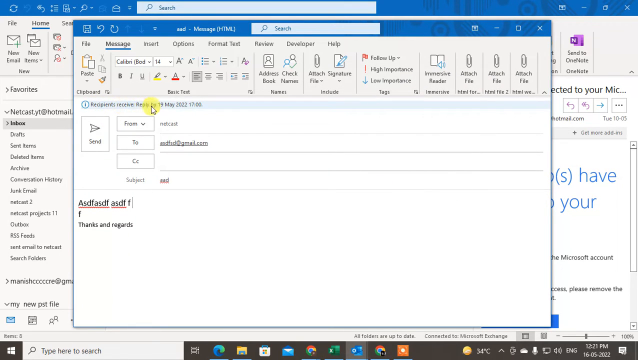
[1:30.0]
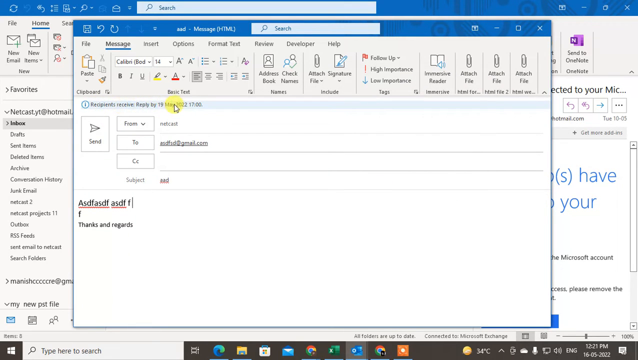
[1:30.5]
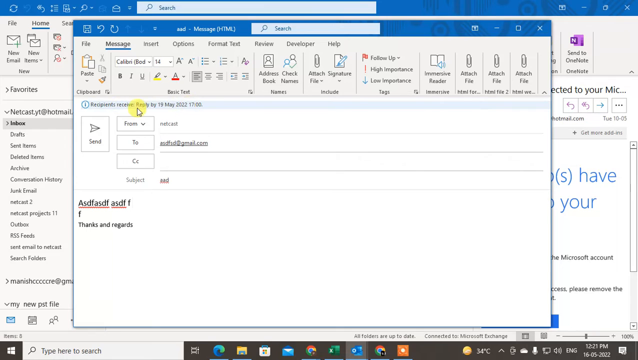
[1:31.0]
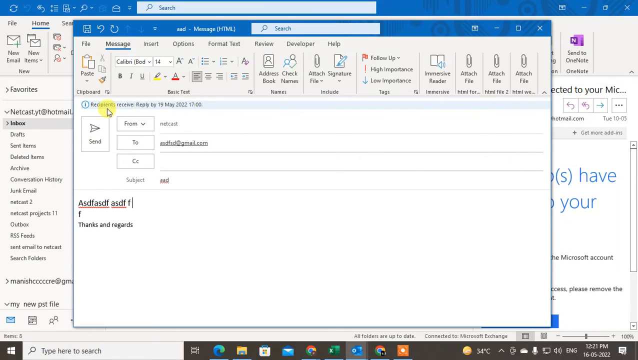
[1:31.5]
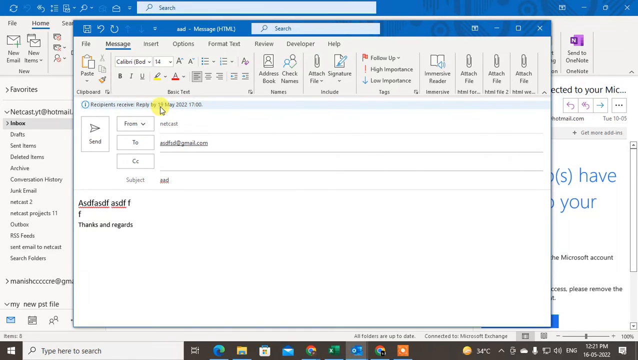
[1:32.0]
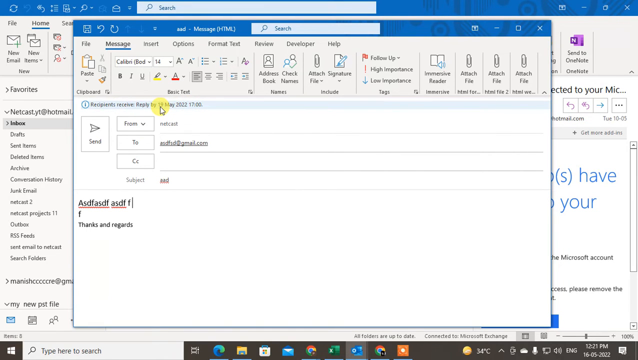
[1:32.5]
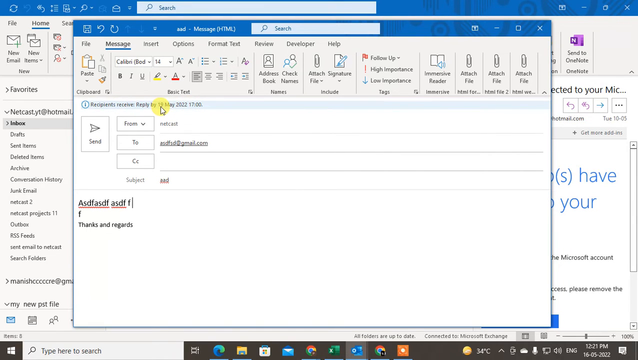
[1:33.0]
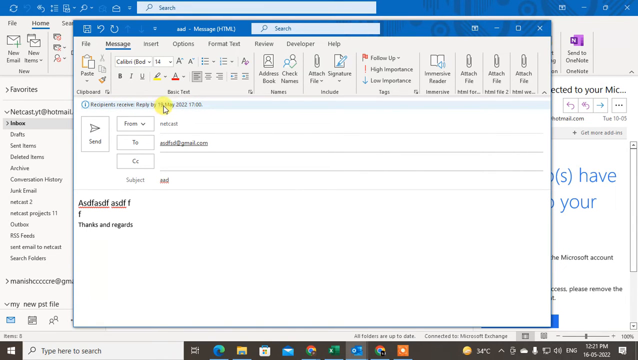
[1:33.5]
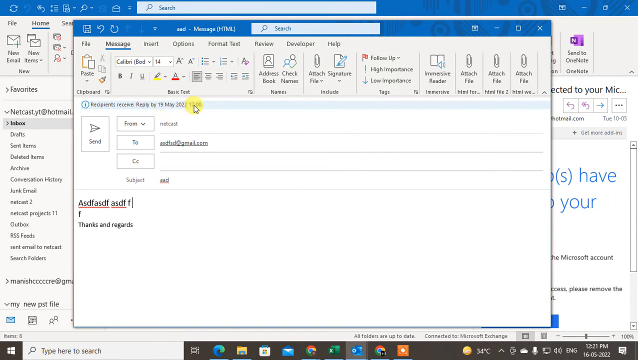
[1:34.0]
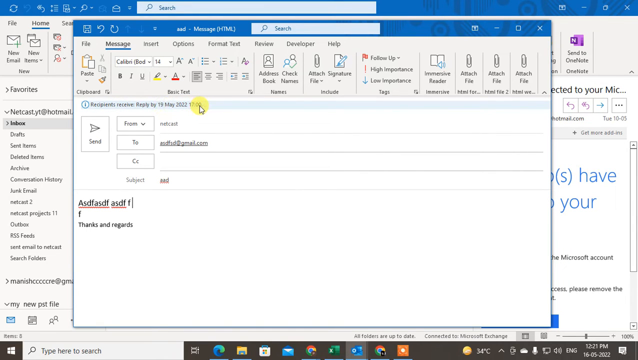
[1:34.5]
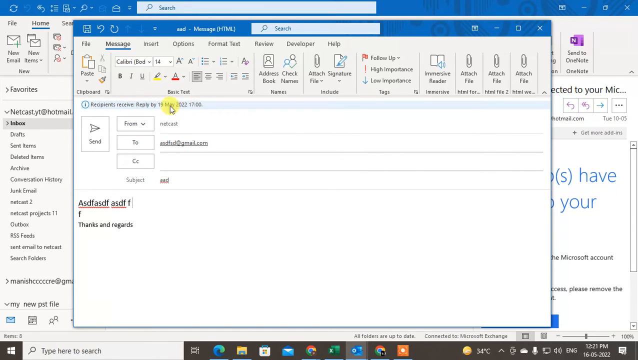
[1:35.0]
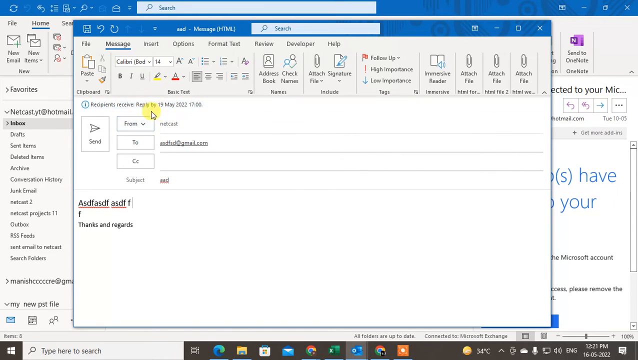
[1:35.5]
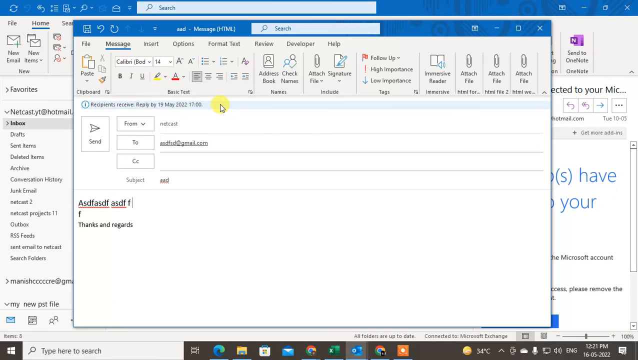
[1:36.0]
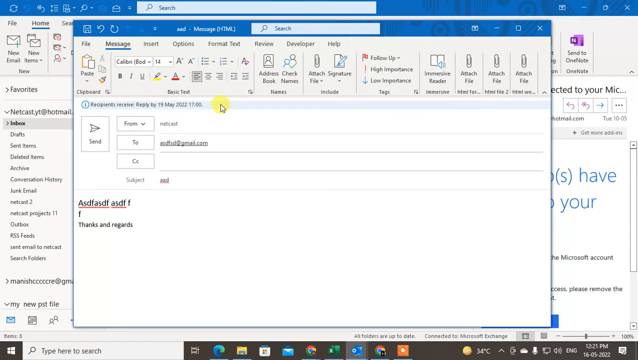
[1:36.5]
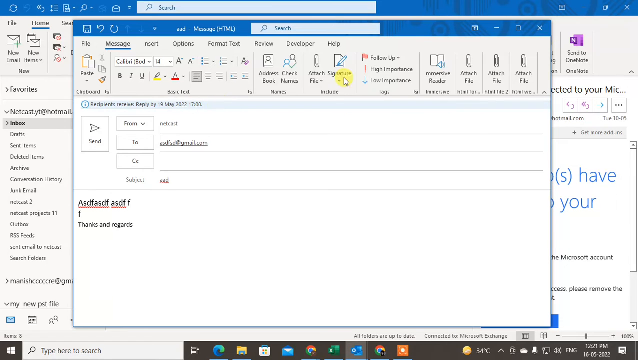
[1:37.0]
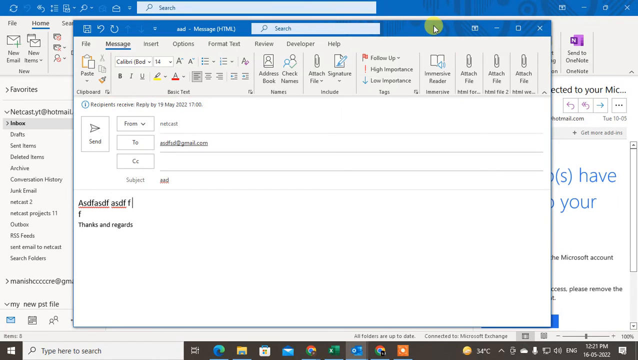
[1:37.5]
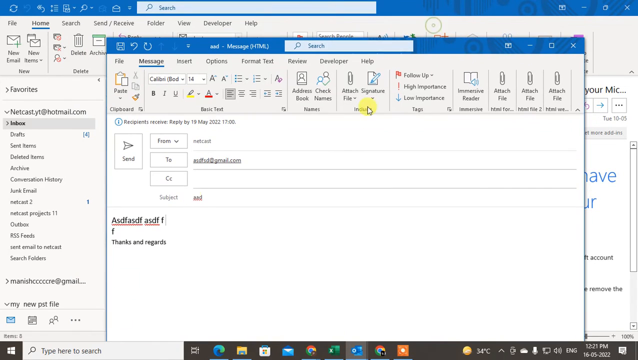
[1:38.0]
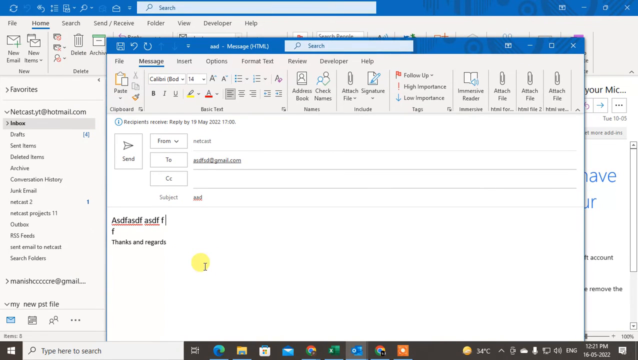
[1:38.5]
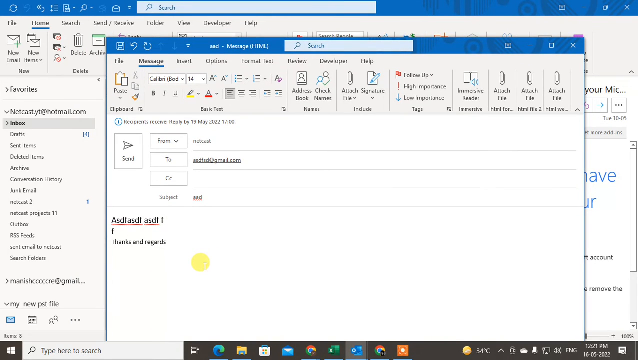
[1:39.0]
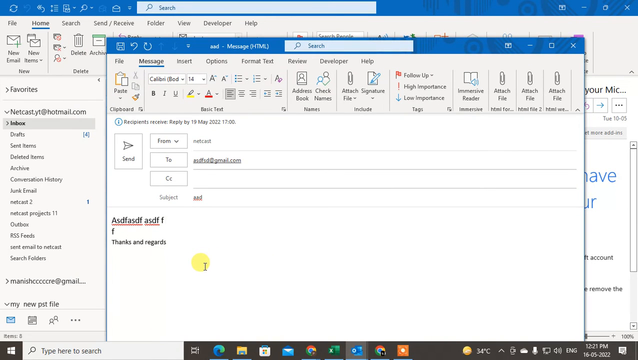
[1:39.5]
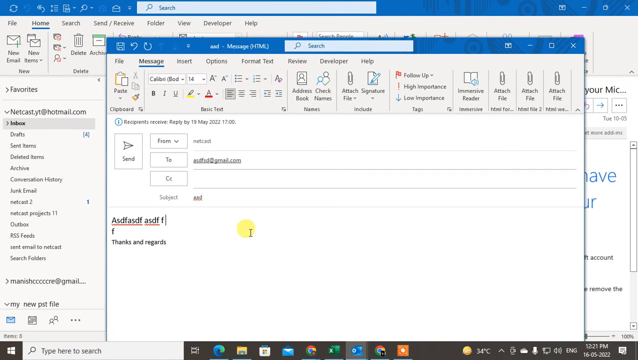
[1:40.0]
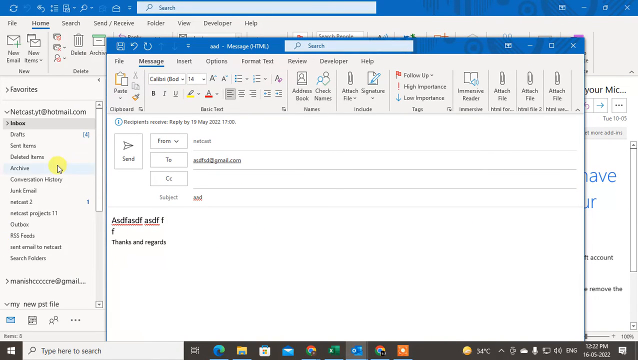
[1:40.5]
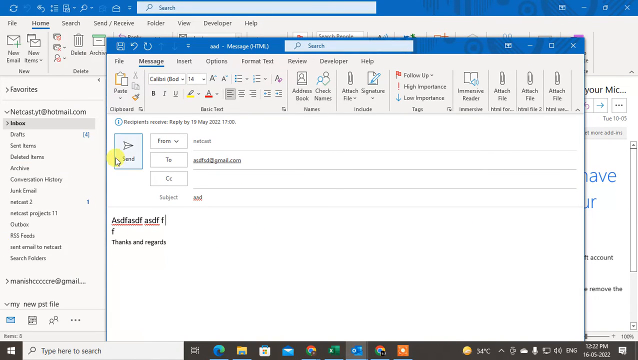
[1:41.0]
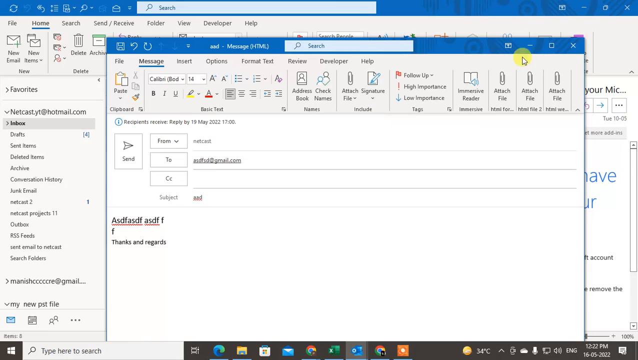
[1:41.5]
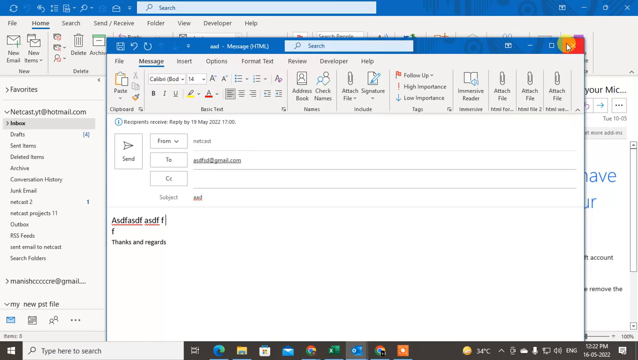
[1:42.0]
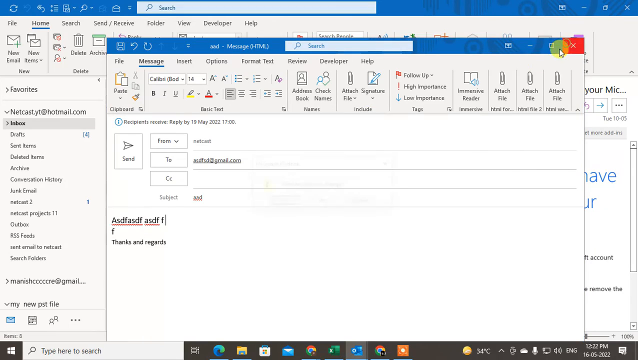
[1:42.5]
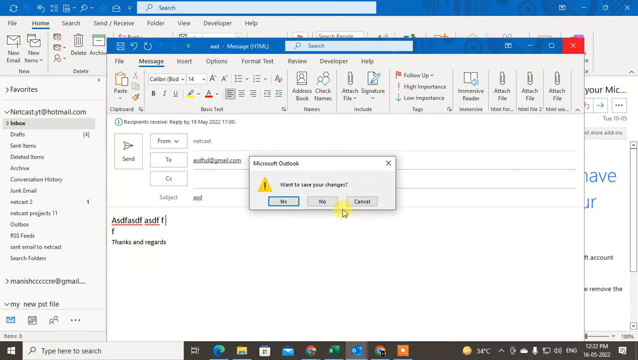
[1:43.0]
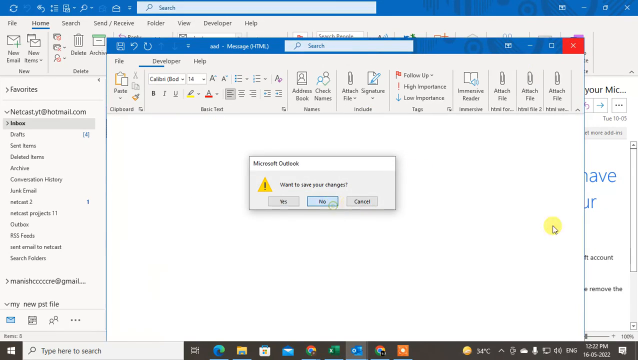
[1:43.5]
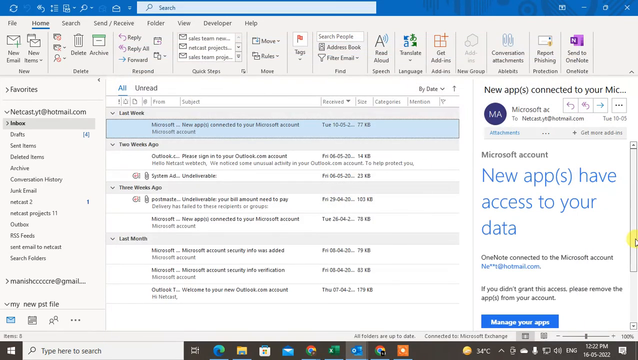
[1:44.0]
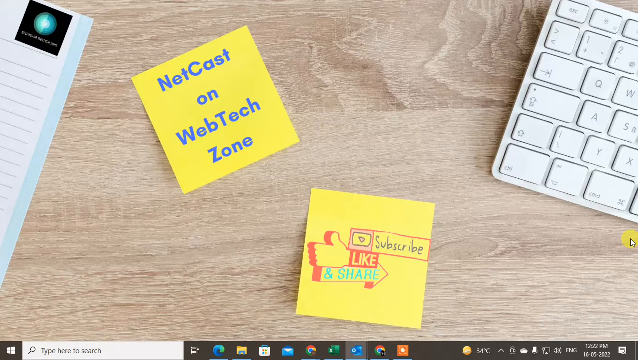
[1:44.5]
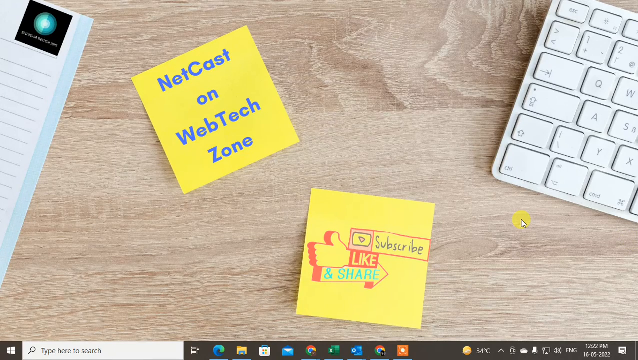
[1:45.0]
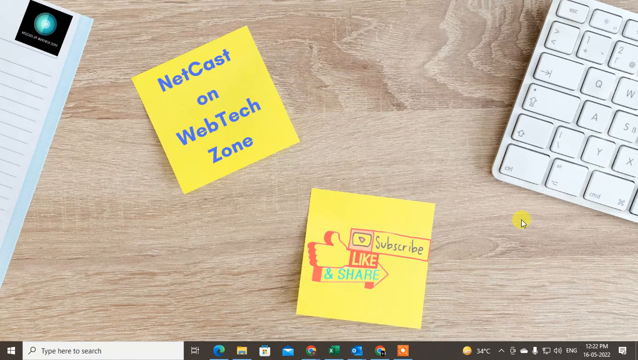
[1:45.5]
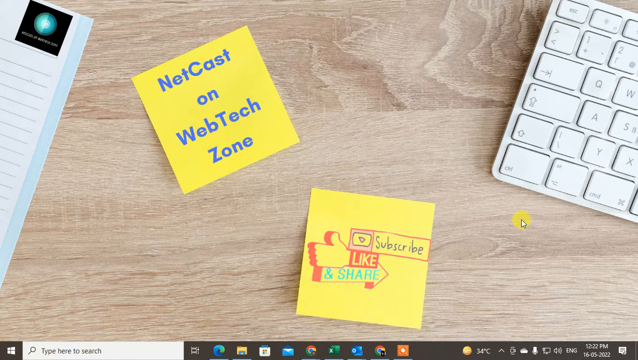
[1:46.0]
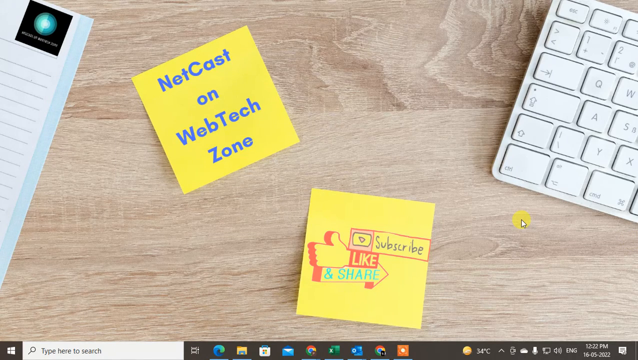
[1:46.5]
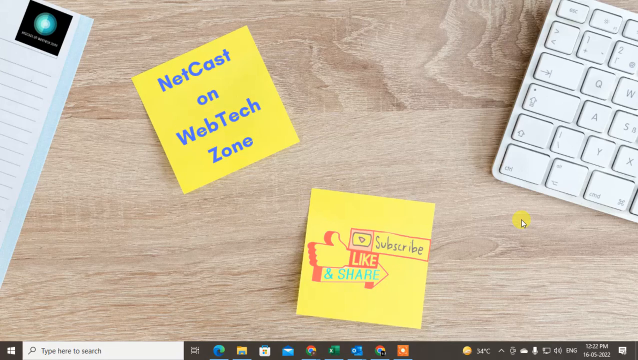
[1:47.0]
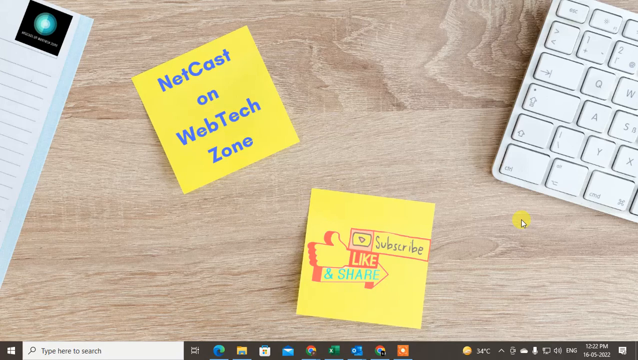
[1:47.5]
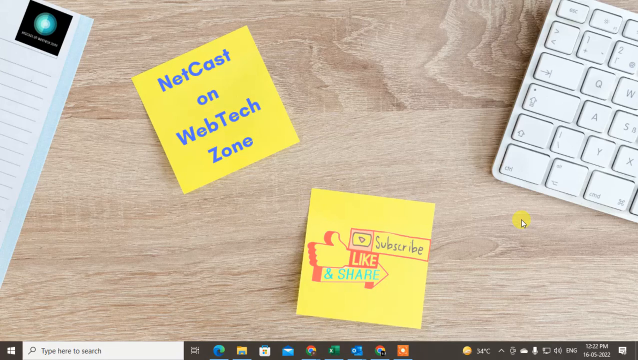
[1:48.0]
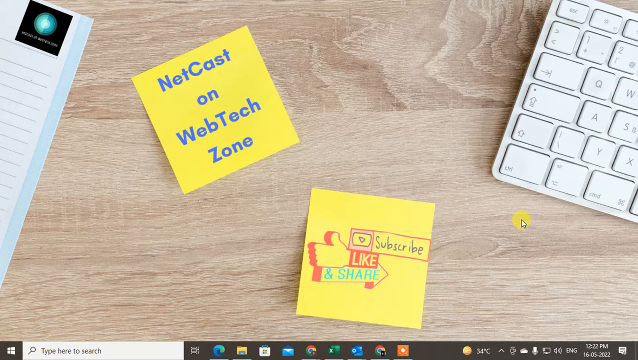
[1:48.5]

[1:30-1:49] The same email client is open with the same message. The user moves the mouse left and right over a message that states "recipients receive reply by 19 May 2022 17:00", which seems to imply the email is set to go out at a certain date or time rather than instantly. The user hovers over the top to move the window a small amount, then goes to the bottom of the main text box and clicks it. The user then closes the new message dialog and clicks no to not save the changes, returning to the primary interface. The video then cuts back to the table with the notepad, keyboard and sticky notes on it.